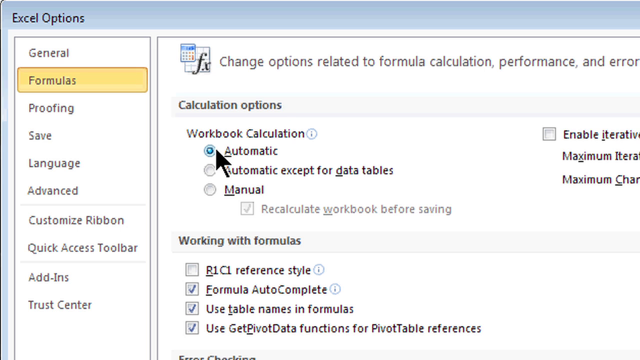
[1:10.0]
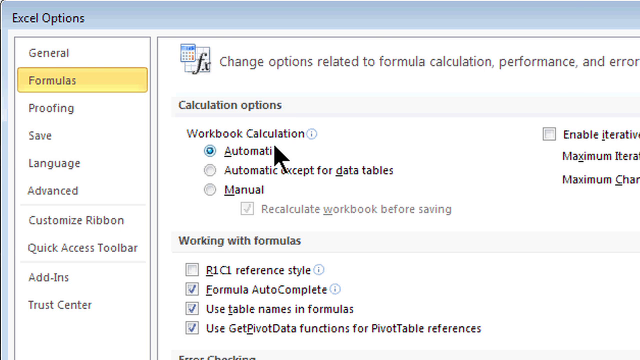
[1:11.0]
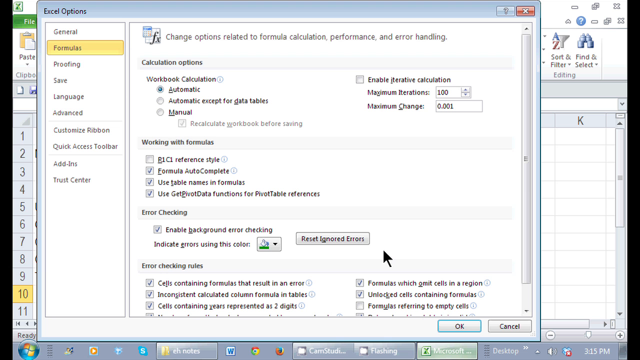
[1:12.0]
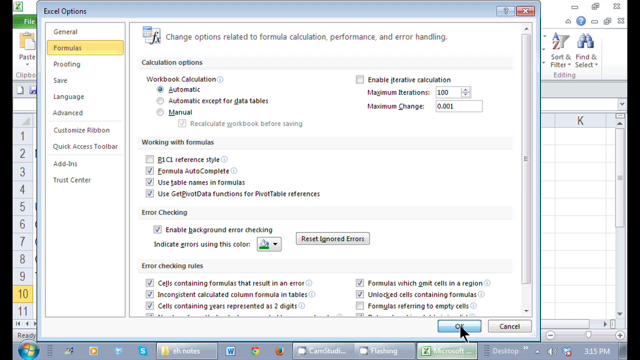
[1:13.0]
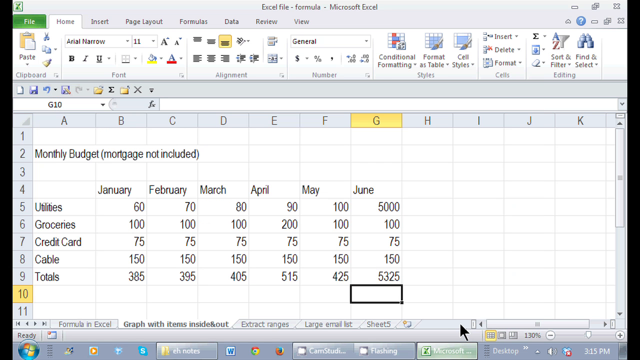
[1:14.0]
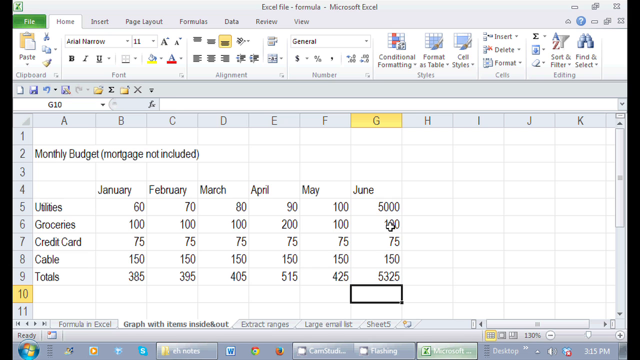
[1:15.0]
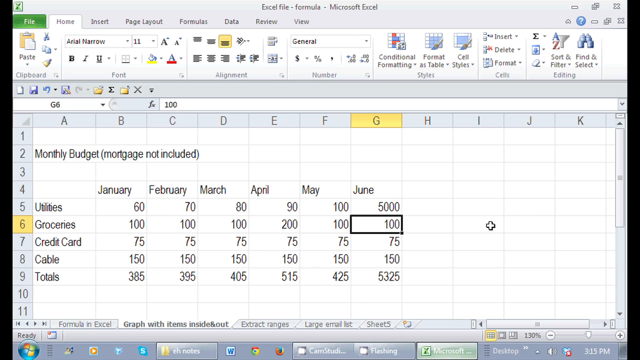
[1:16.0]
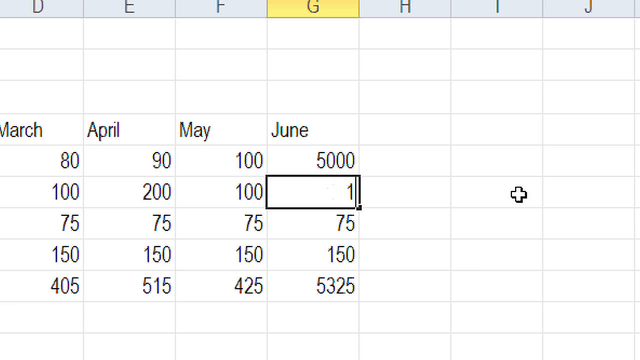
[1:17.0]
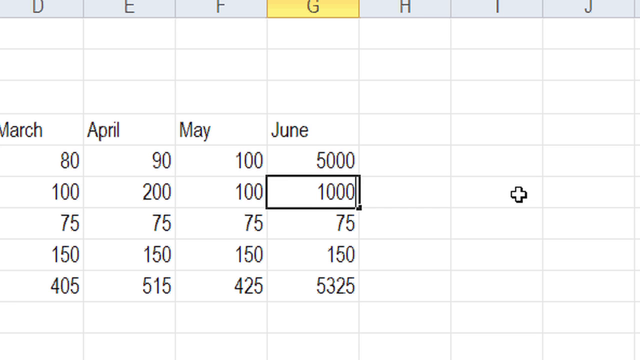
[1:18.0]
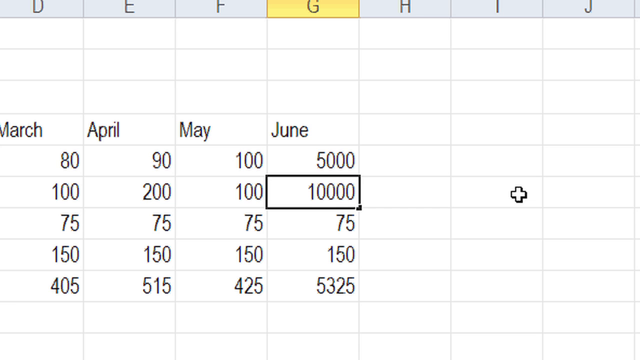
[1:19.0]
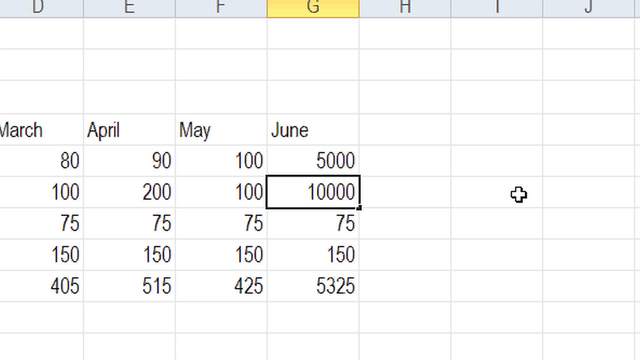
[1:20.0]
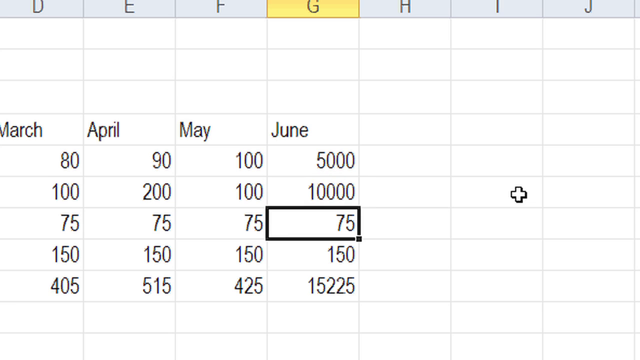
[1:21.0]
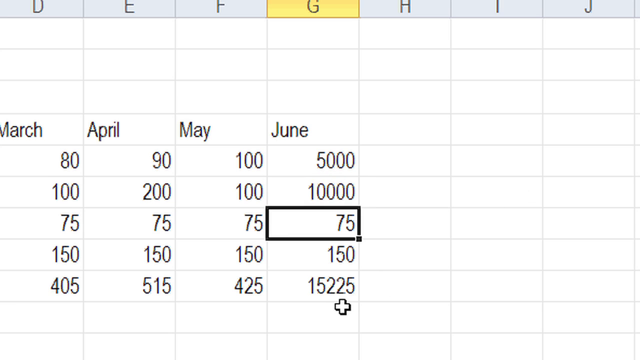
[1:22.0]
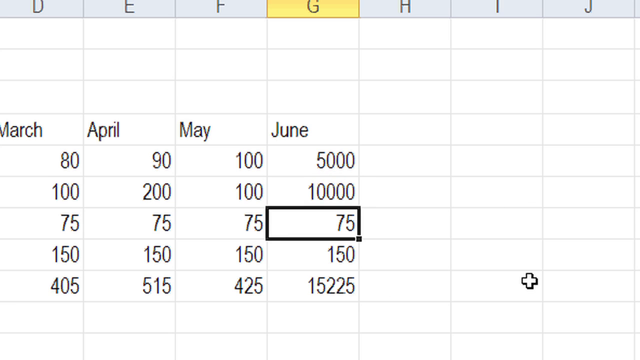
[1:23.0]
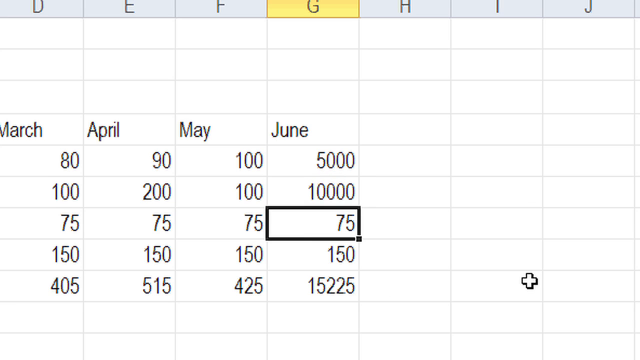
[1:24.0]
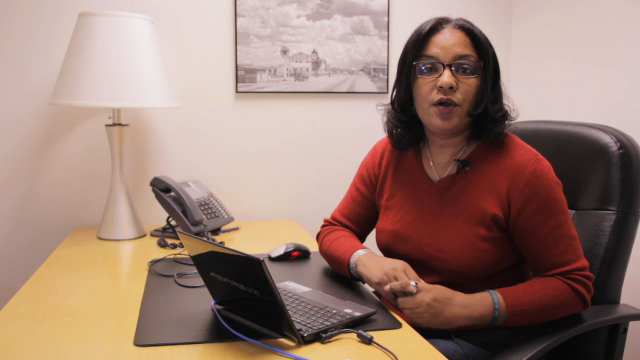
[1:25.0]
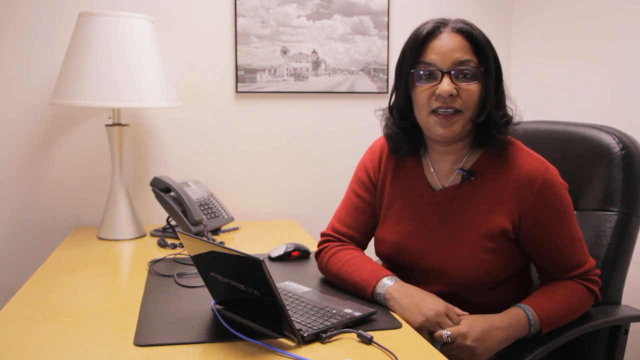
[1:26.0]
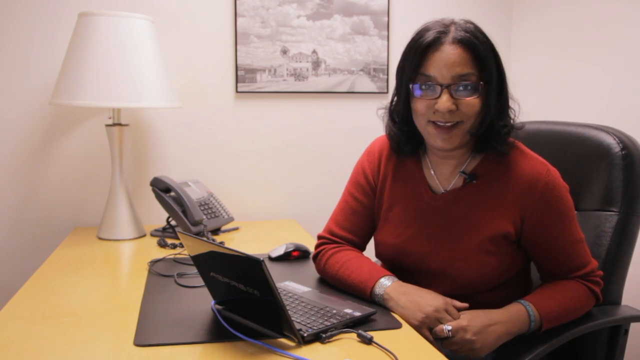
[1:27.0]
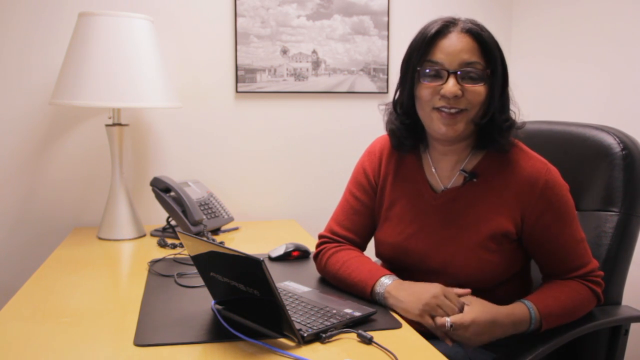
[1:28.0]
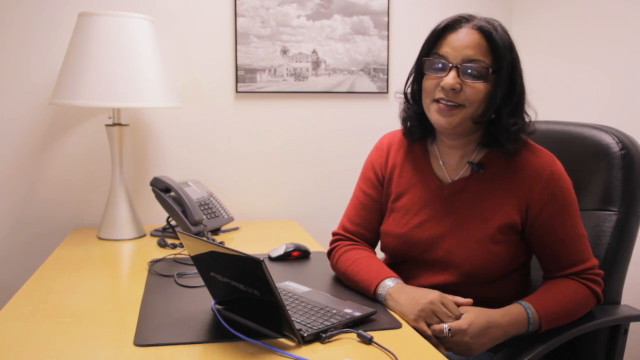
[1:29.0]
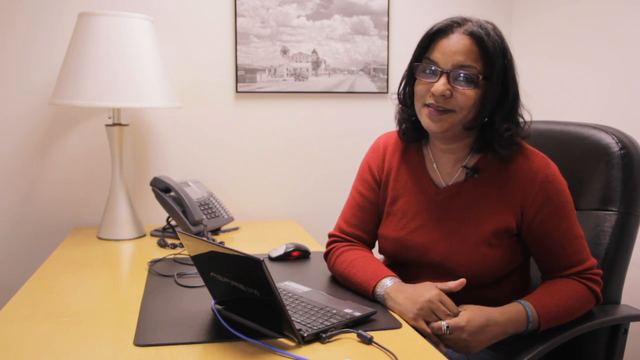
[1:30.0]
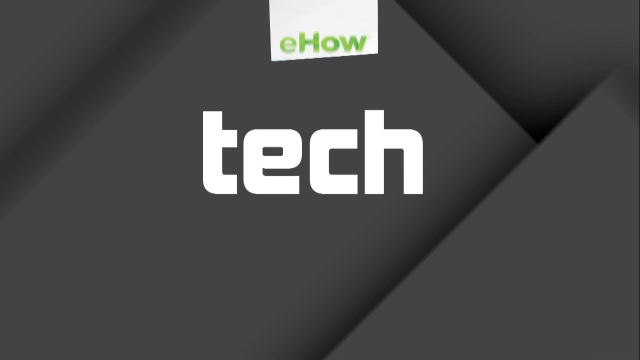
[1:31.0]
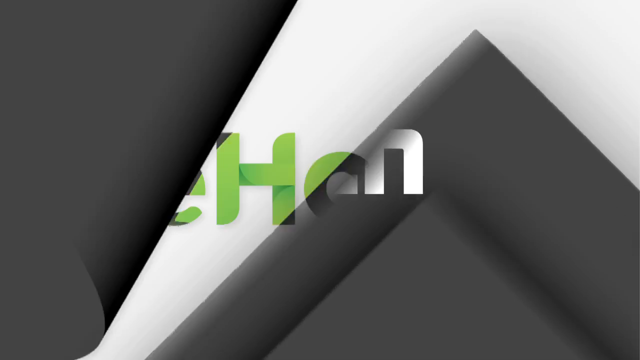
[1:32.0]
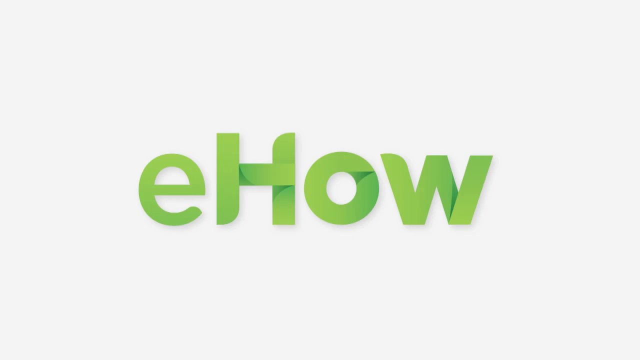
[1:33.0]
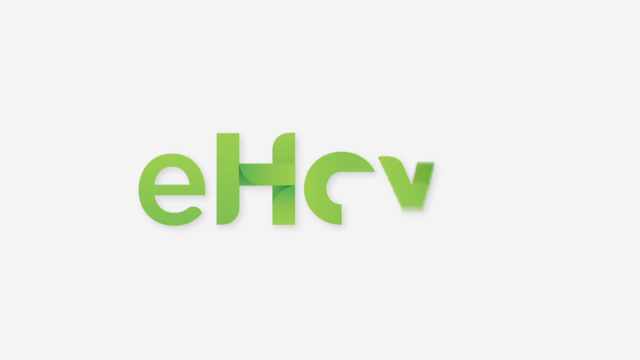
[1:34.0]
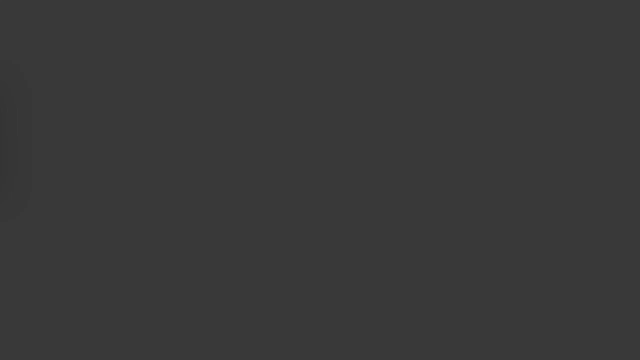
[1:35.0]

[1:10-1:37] In the Excel Options formula settings, she closes the settings window and returns to the original worksheet. She goes back to the June column and the groceries row and changes the June groceries number to 10,000, apparently showing how the changed settings affect how the formulas work. The video then returns to the woman speaking to the camera in the office. Another transition leads to the outro: the gray background with white text reading "tech" and the eHow logo above it. Finally, it returns to the white background with the green triangular animation of the eHow logo, followed by a black screen with small white text reading "film".